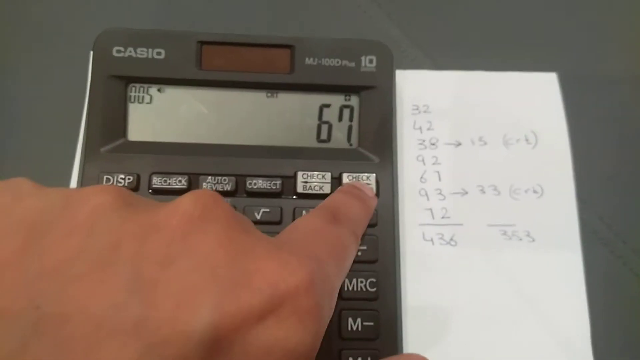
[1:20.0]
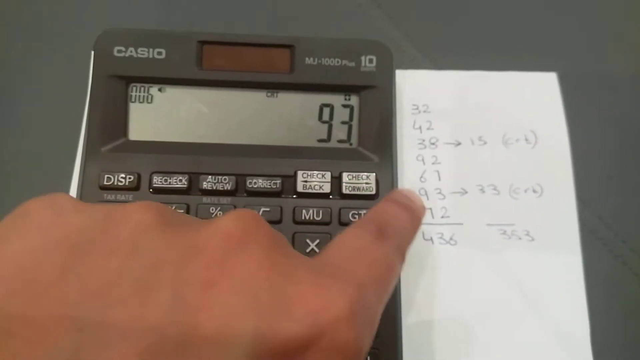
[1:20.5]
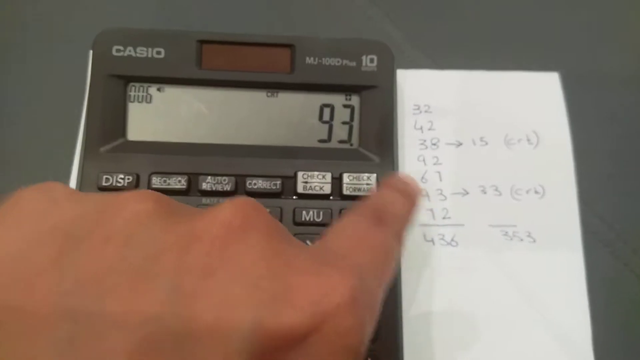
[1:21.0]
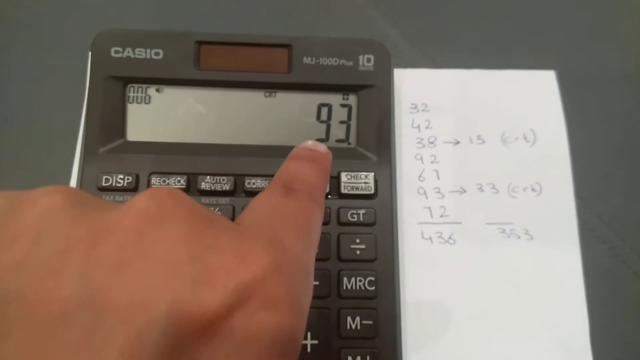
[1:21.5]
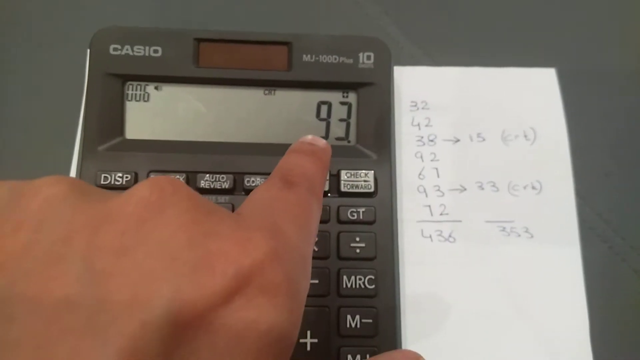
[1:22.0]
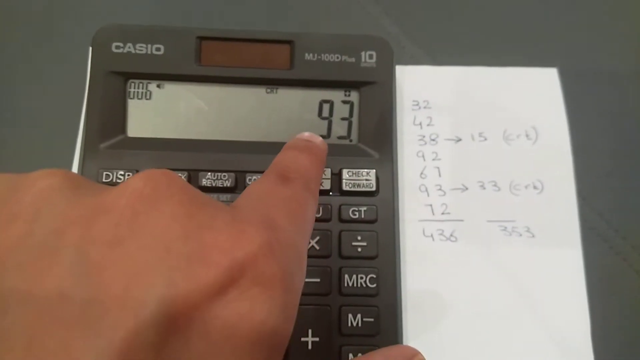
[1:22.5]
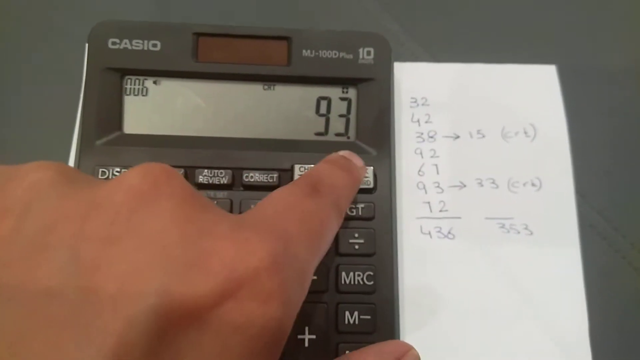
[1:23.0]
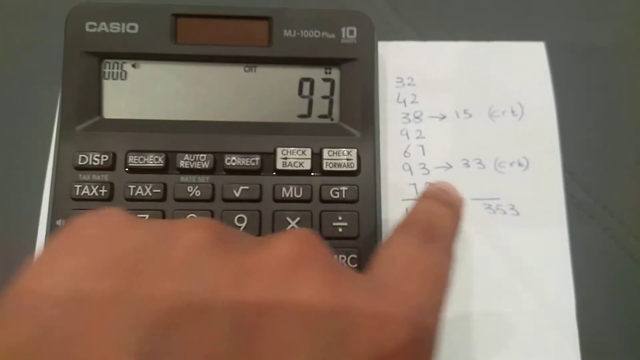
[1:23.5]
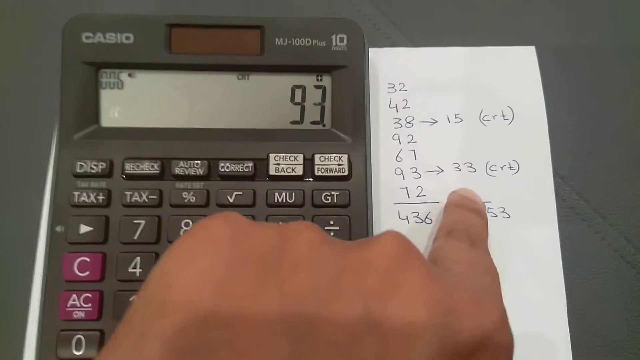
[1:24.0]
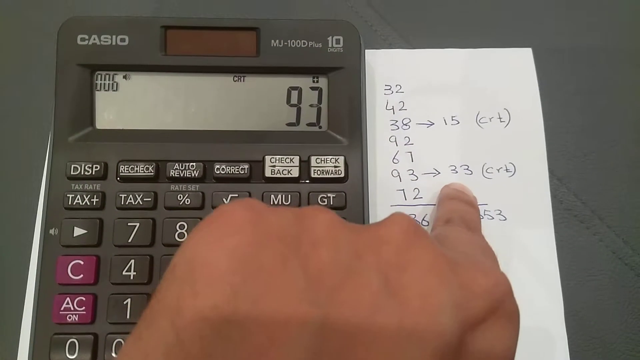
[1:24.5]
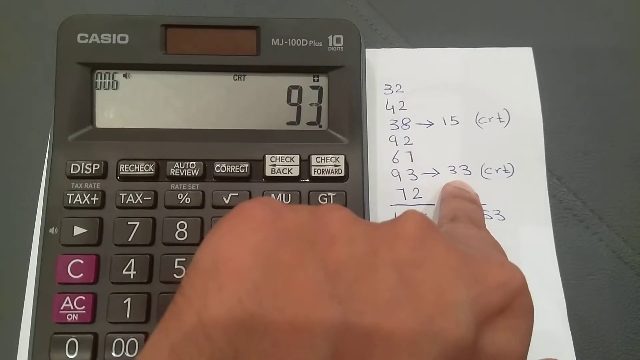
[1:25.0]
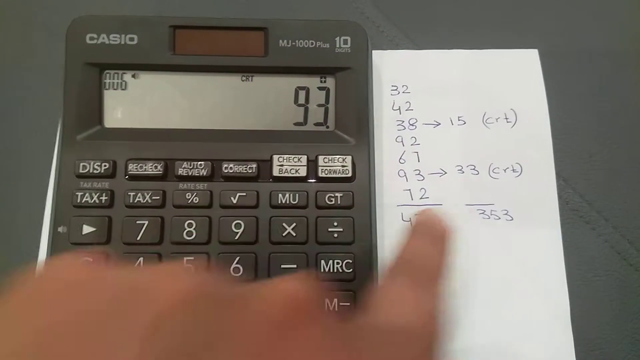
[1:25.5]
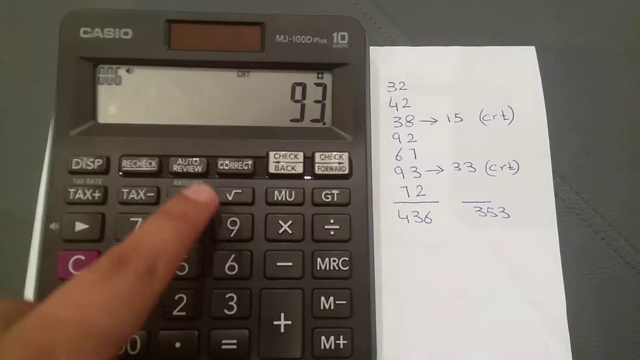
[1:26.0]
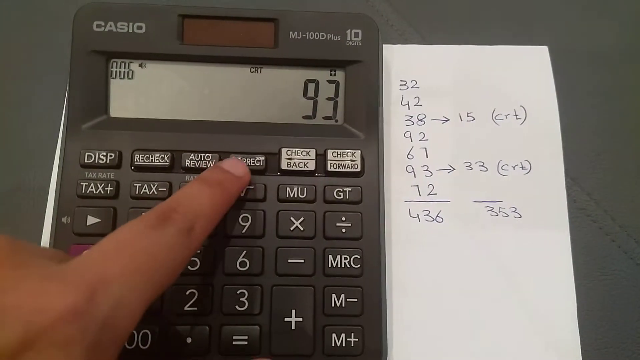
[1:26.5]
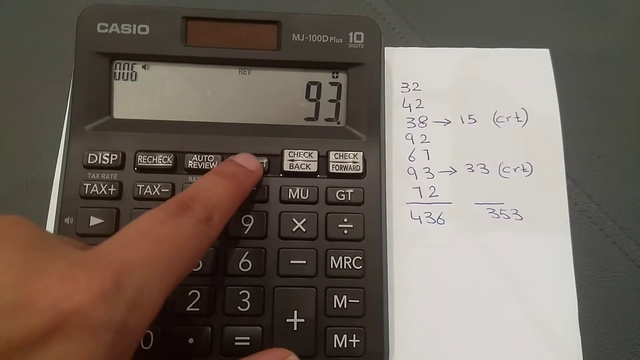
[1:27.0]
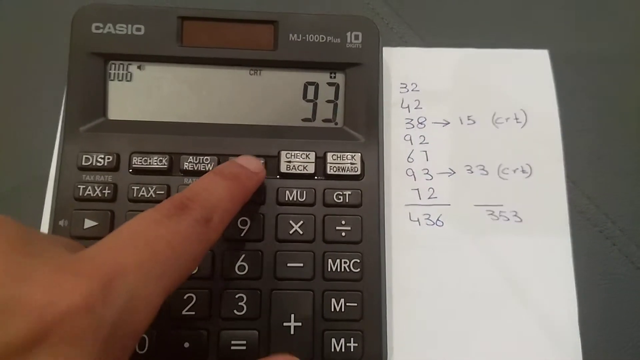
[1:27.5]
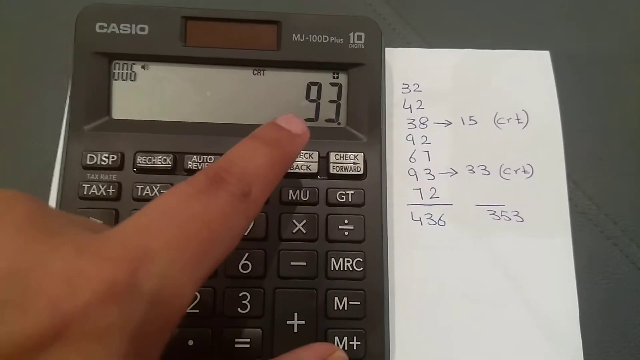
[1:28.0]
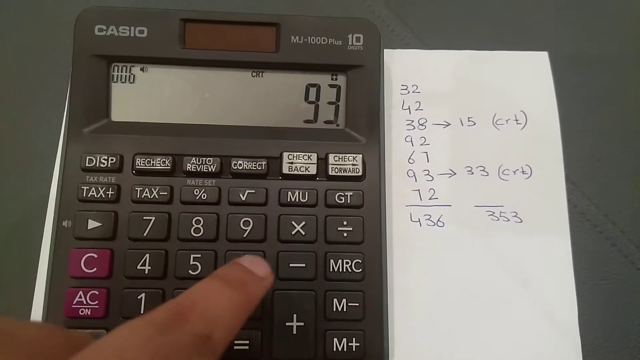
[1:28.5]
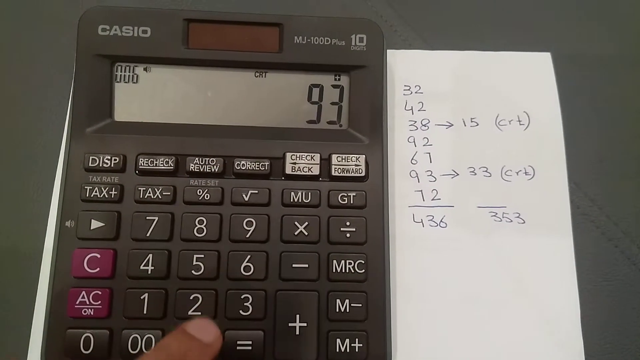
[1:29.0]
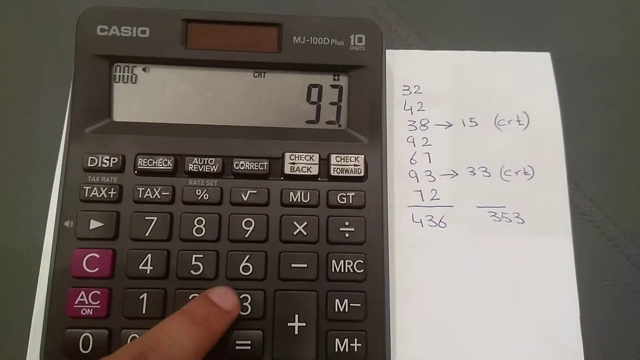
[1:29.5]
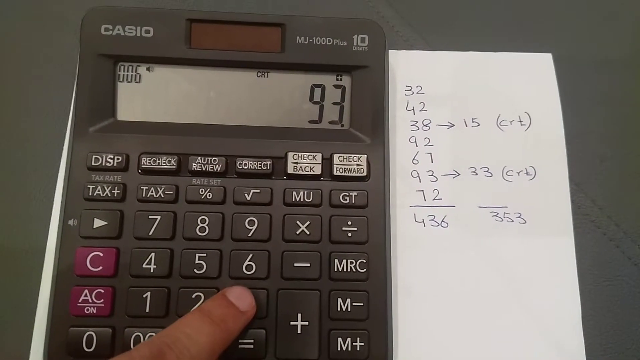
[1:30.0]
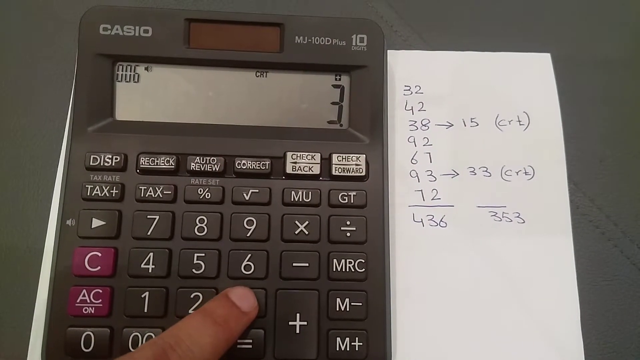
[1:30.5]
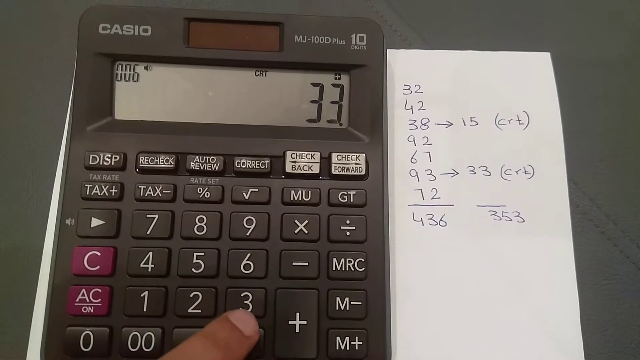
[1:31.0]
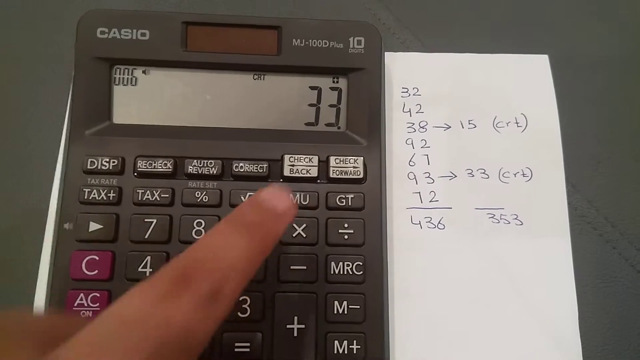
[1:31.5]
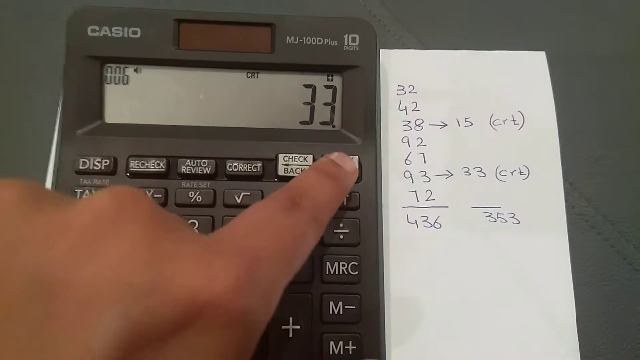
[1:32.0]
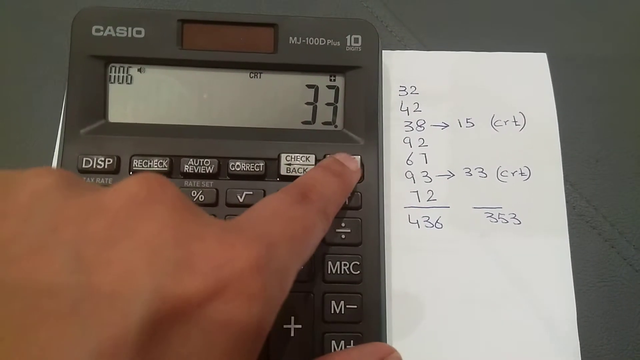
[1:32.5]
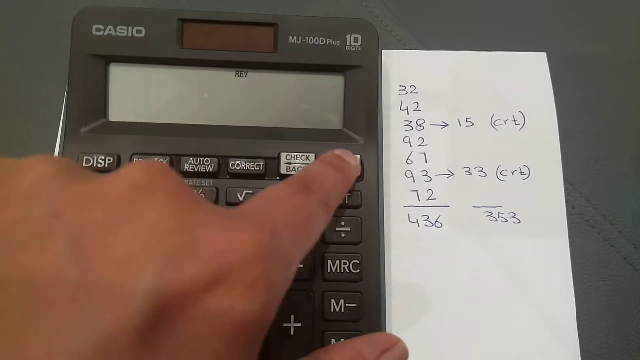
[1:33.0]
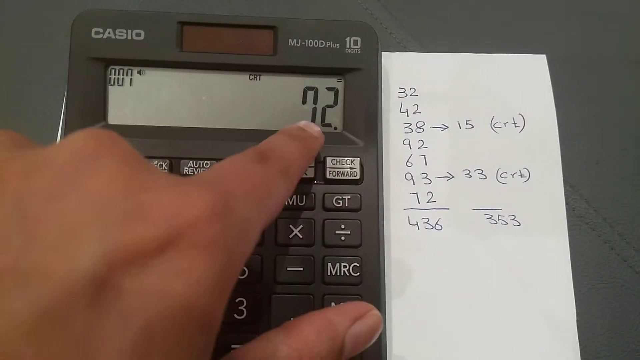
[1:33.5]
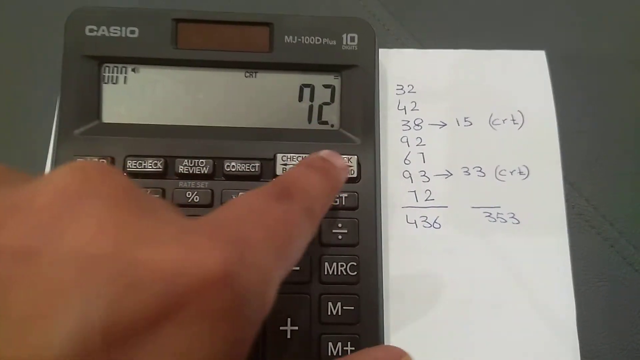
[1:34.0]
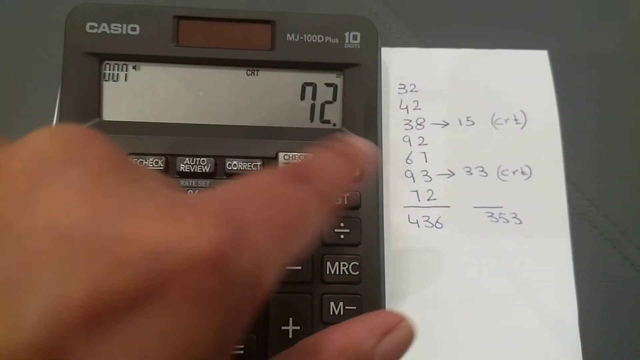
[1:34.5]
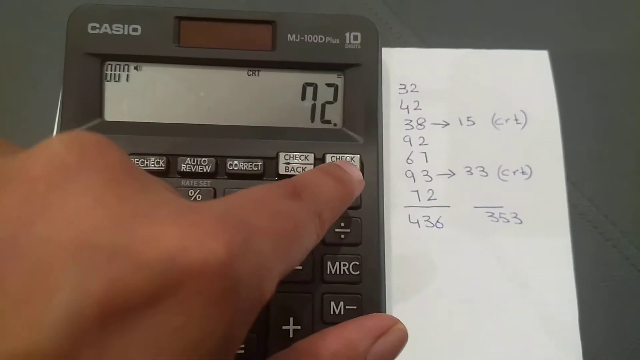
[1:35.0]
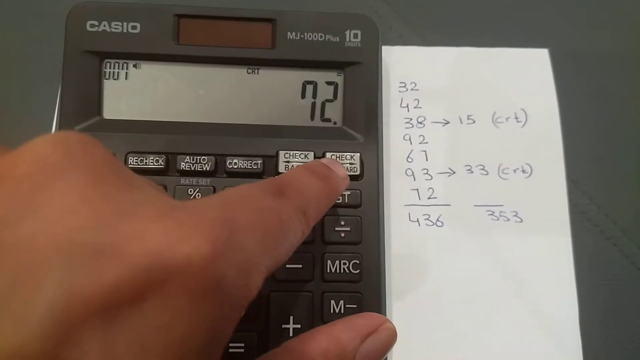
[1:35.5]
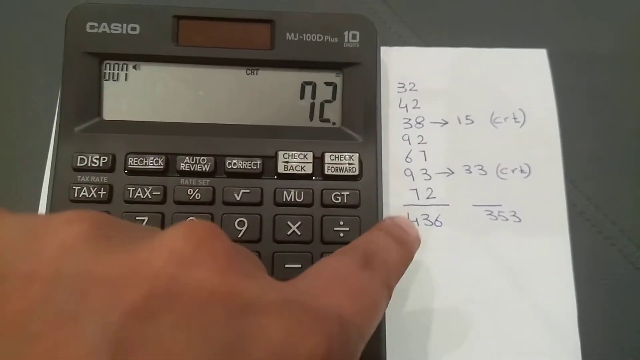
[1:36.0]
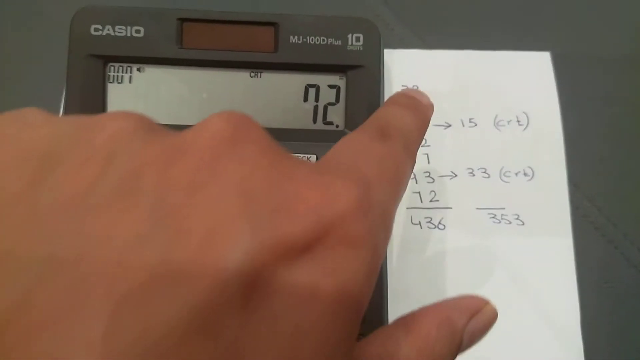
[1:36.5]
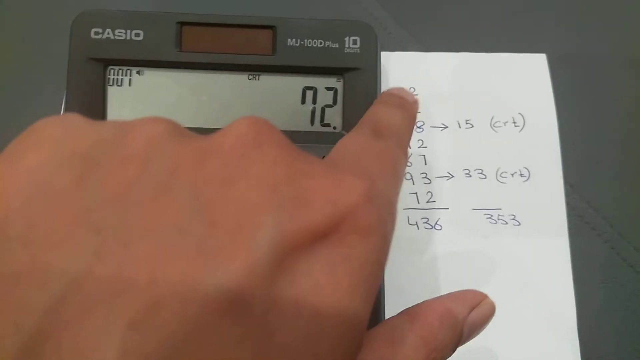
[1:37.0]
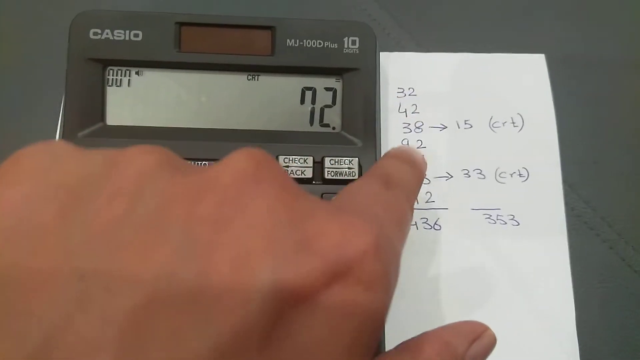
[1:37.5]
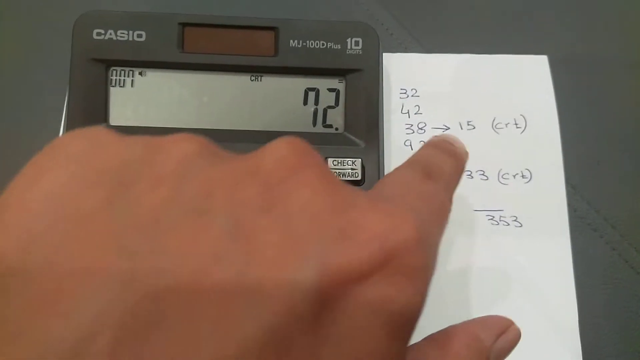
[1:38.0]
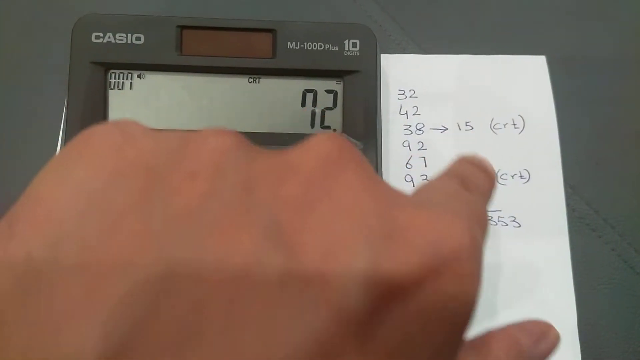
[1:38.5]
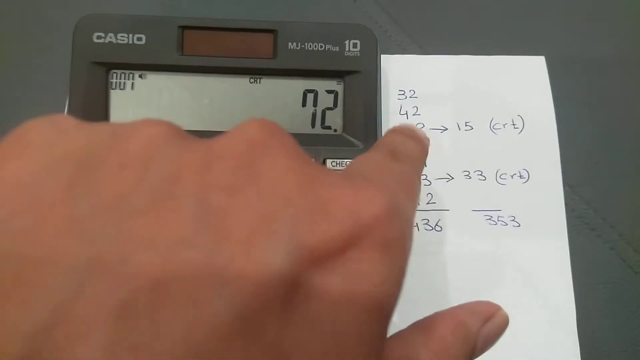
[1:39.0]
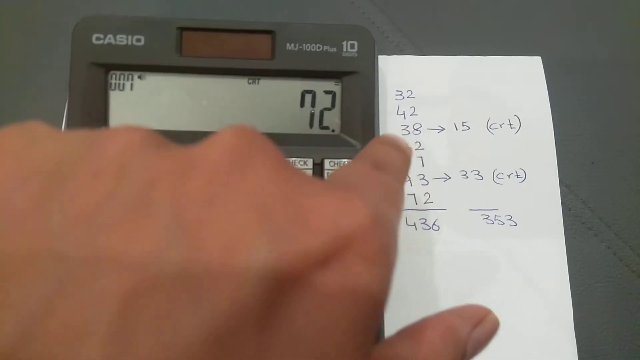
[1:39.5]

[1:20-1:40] The person points to the number 93 in the display window and then to the number 93 on the piece of paper. Beside the 93 on the paper is an arrow pointing out to the right, followed by the number 33 and "CRT". After the 93, they select the correct button, type in 33, and push the check forward button. The display shows 72, the last number on the list on the sheet of paper, which adds up to a total of 436. The check forward button is white with gray letters reading "check forward". To its left is a button labeled "check back", also white with gray letters. To the left of that is the "correct" button, gray with white letters. Further left is "auto review", gray with white letters, and to the left of that is "recheck", also a gray button with white letters. The first button on the top row reads "DISP" in capital white letters on a gray key.